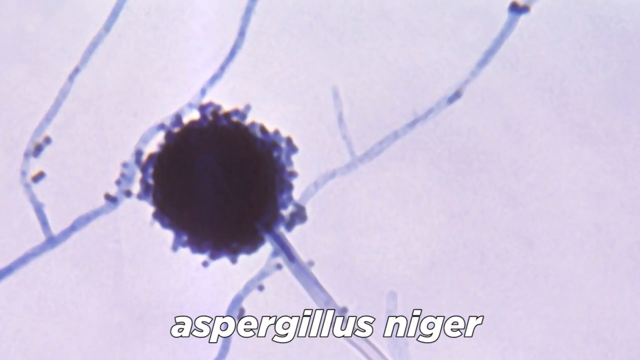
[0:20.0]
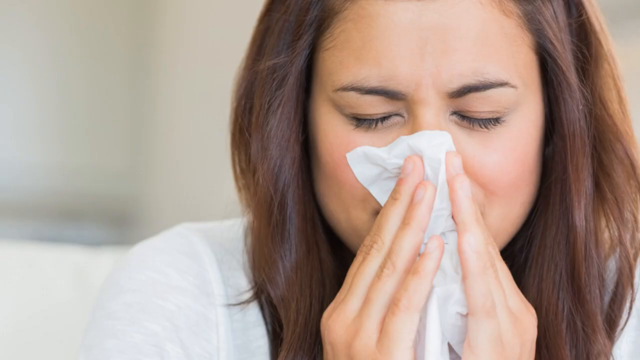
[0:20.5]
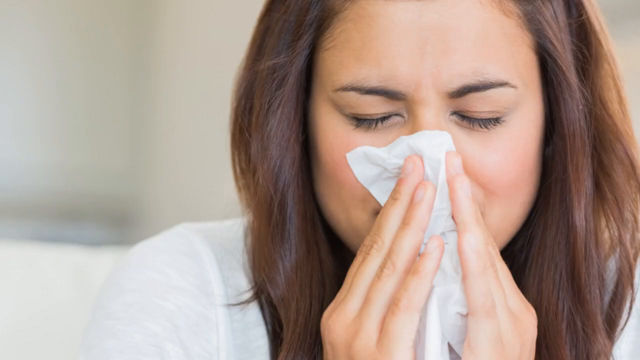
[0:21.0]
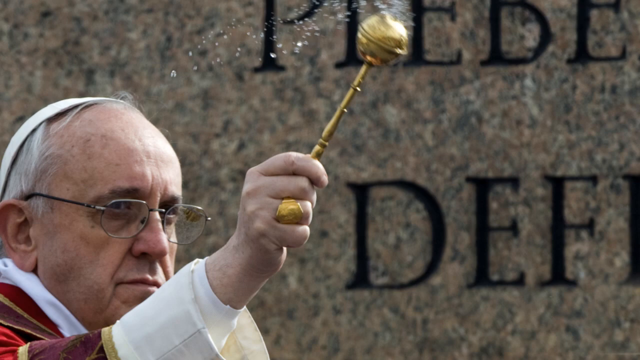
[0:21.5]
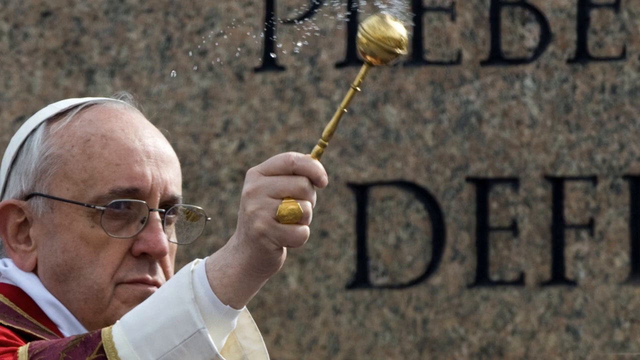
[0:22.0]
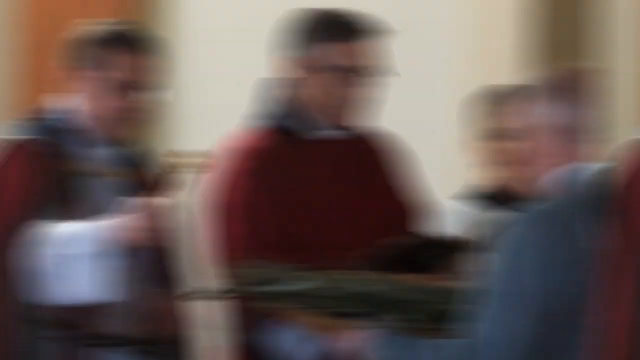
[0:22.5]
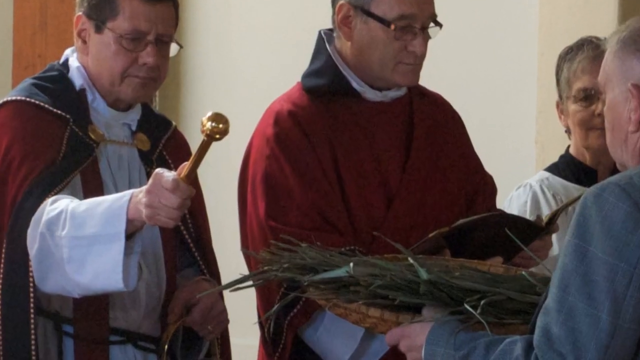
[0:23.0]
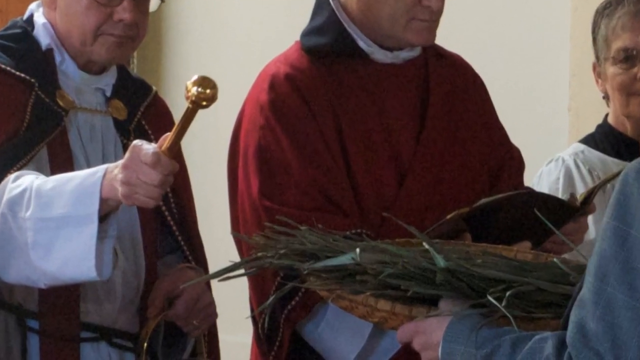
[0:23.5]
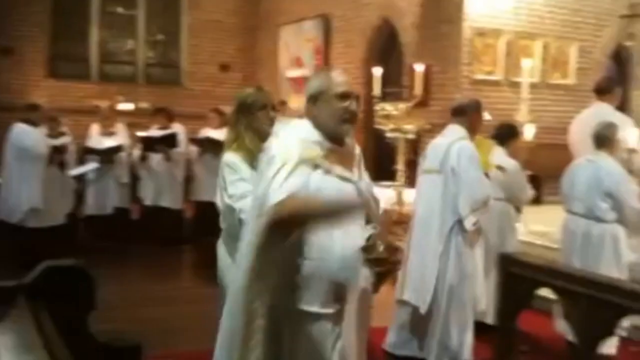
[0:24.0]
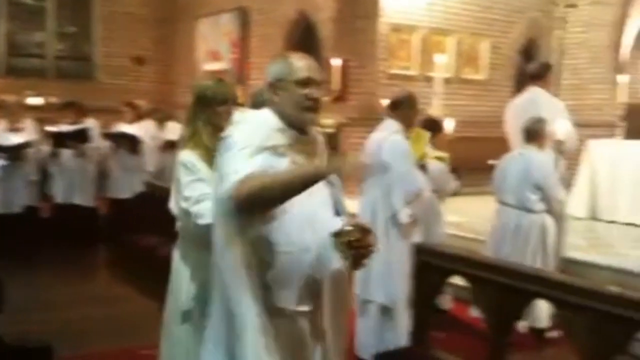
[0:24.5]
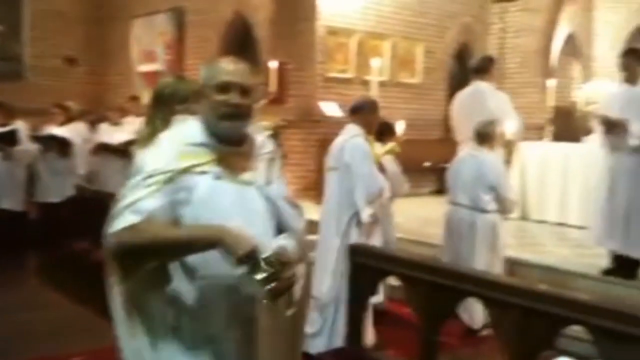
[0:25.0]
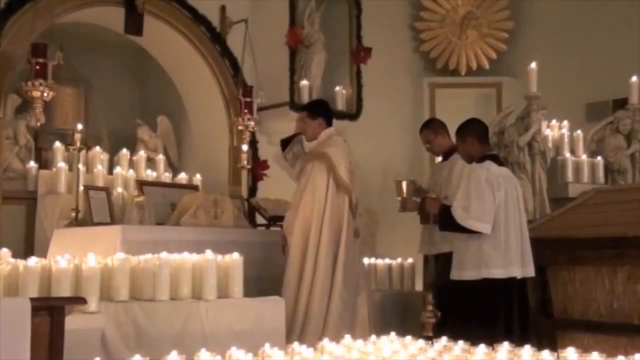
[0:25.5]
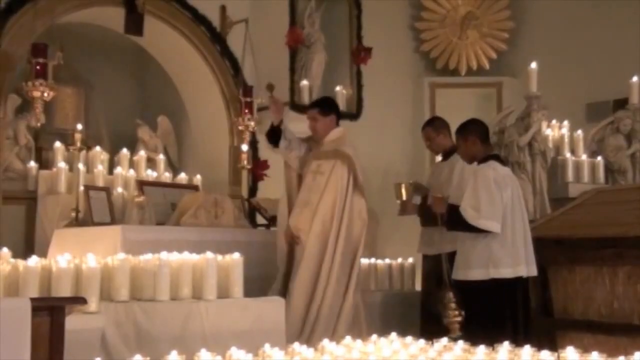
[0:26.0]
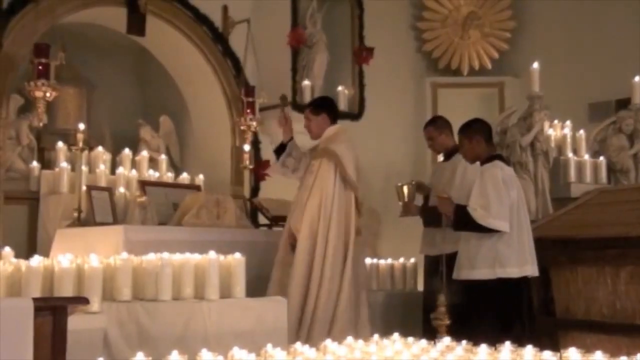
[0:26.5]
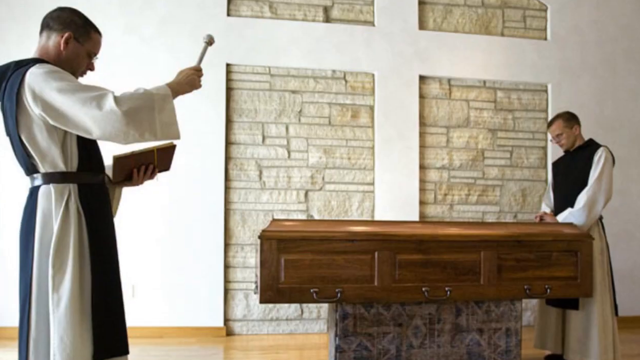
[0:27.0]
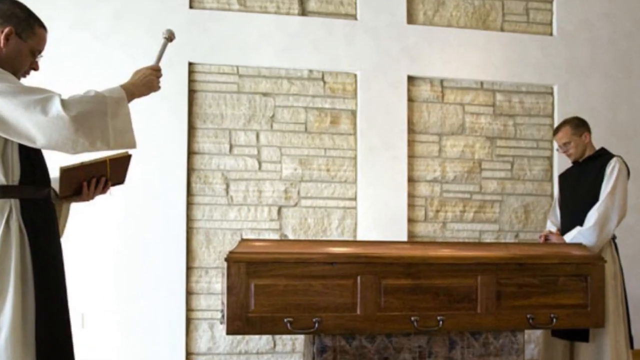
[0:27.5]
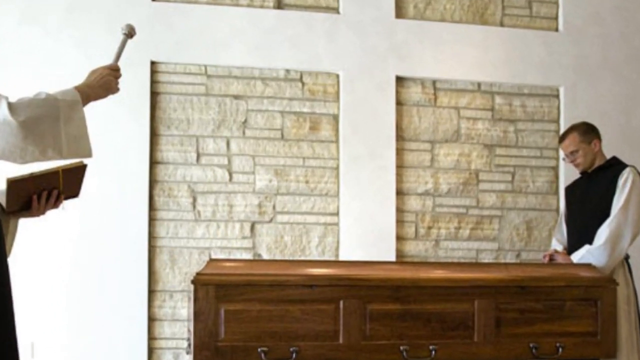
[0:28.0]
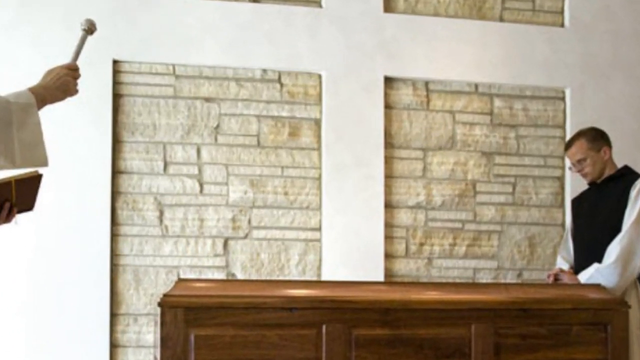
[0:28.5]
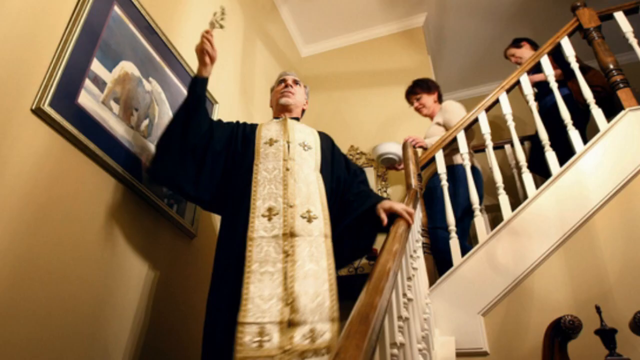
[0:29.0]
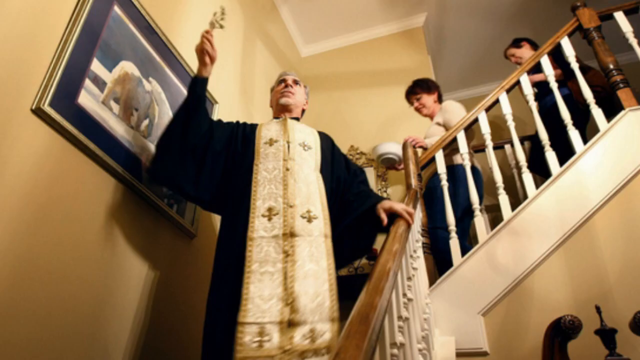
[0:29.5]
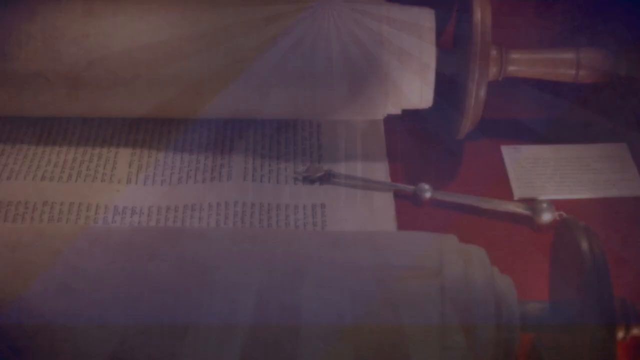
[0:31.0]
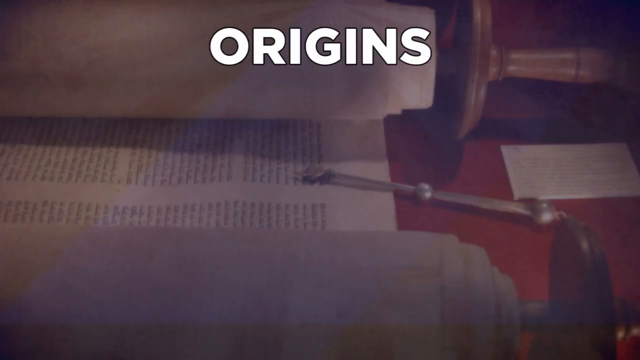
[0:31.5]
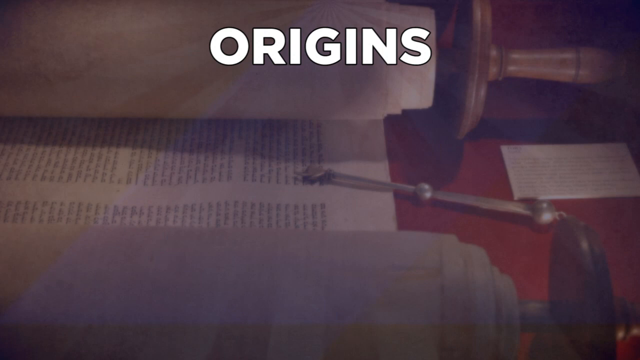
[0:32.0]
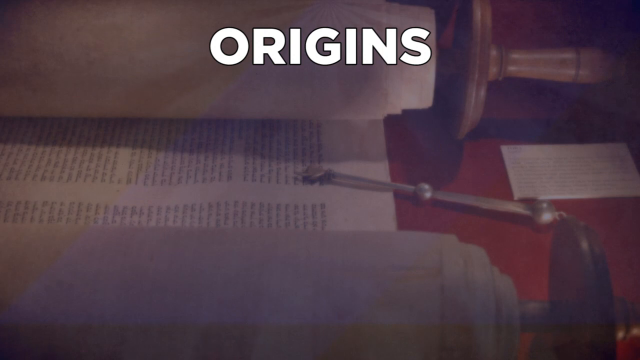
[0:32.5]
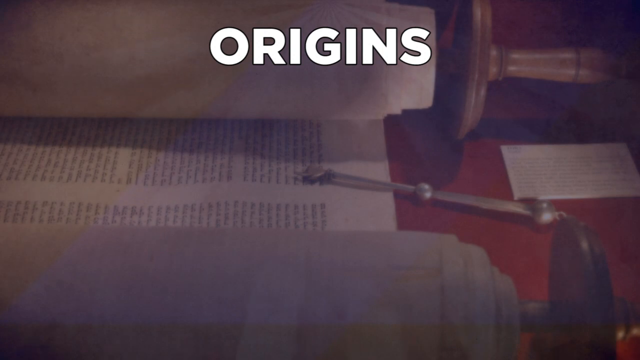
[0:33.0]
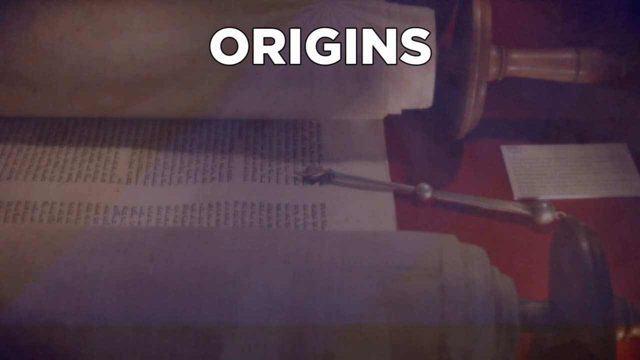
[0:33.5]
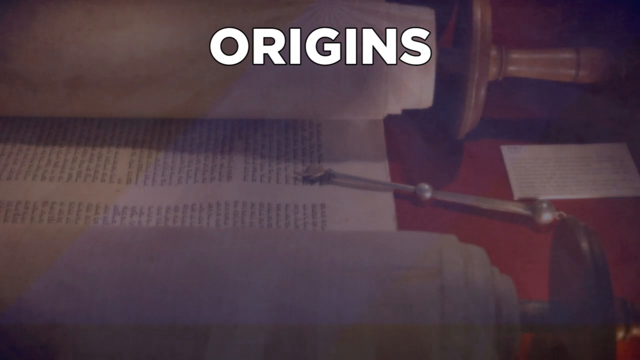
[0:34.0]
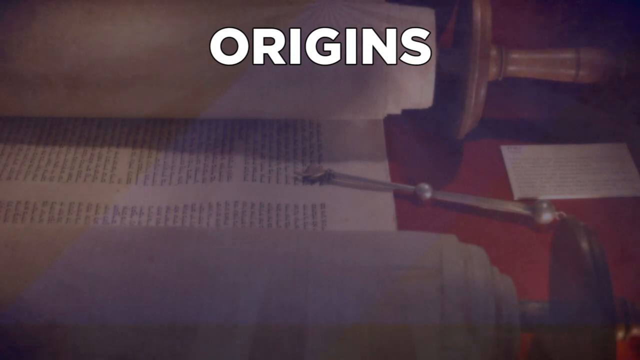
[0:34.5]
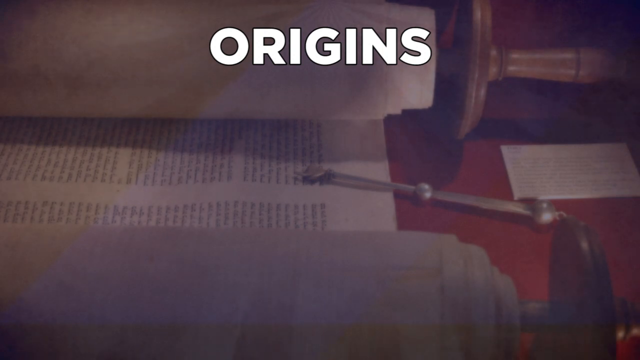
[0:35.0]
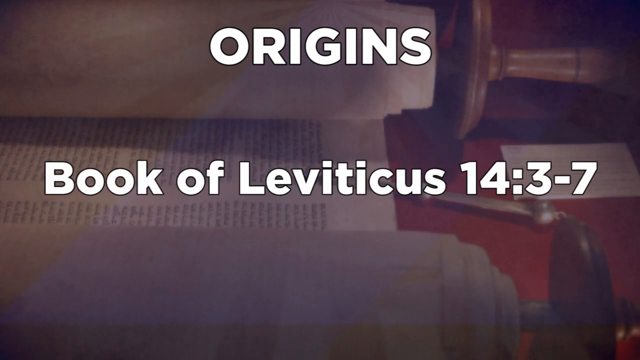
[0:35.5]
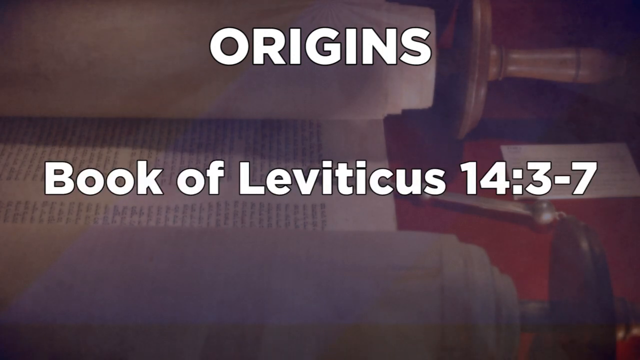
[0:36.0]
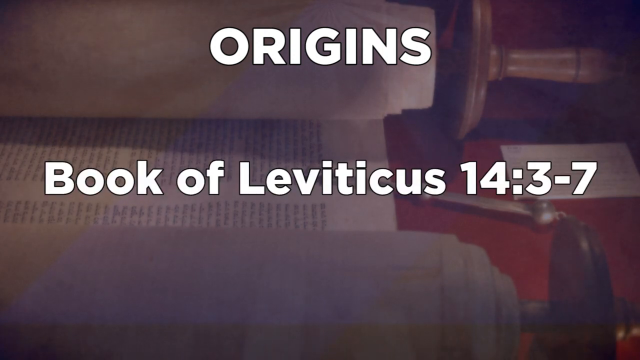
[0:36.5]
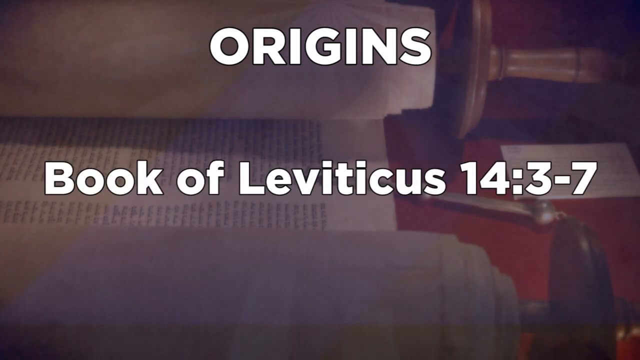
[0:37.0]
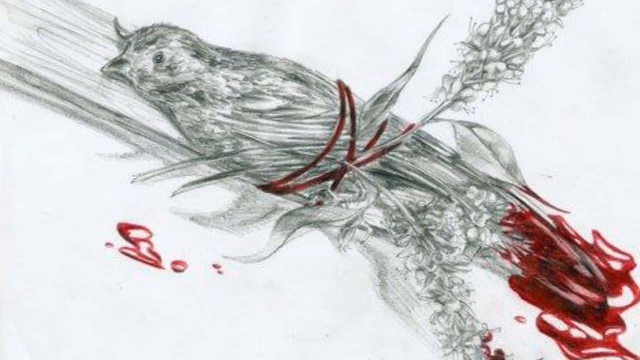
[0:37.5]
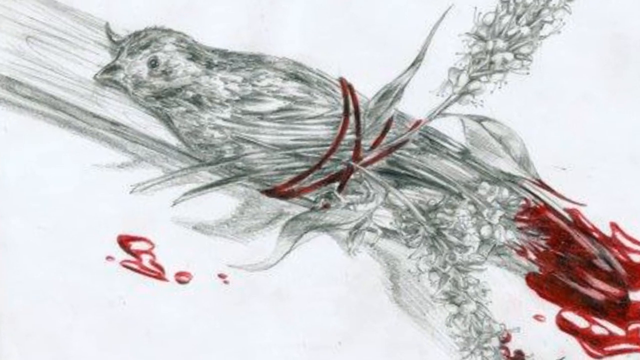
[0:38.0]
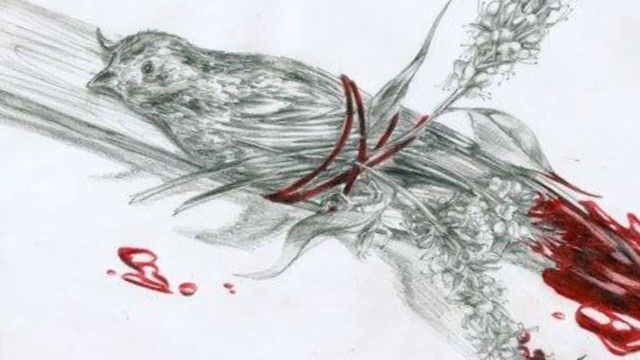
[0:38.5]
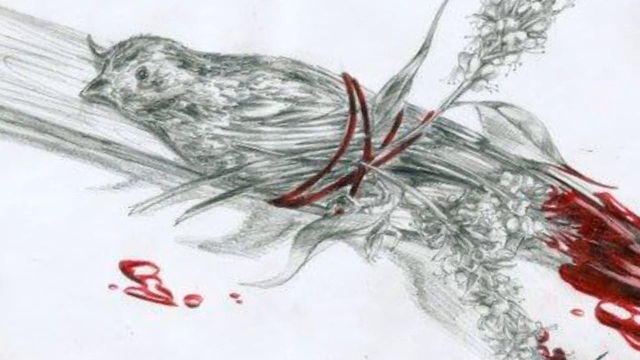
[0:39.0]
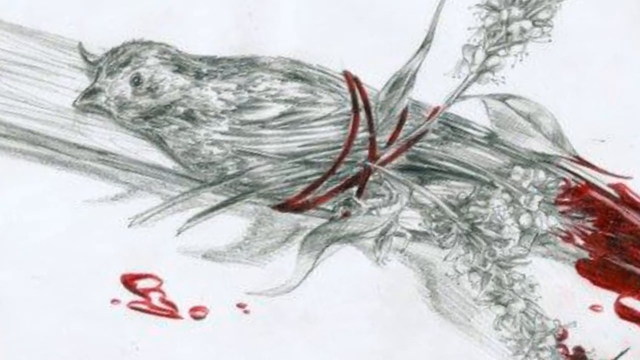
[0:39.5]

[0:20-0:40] The picture zooms in on what is apparently aspergillus niger, and a brunette woman is shown. A picture of the priest with the shaker he threw liquid onto the people with appears briefly. A new group of priests follows, wearing red, some of them wearing white, and the main priest holds an item that looks like a baby shaker. Another video clip shows a priest in white throwing liquid onto the congregation, his hand in a cup. Another group of priests is doing prayers, and one holds the baby-shaker-looking tool; many different candles are visible. Another priest holds the baby-shaker-looking item and has the Bible in his hand as he prays. Another priest is by a table, and they are dressed in black and white robes. Another priest is also holding the baby-shaker-looking item. Text then says "Origins, Book of Leviticus 14, 3-7," and a picture shows a bird, possibly a crow, tied to reeds and twigs.